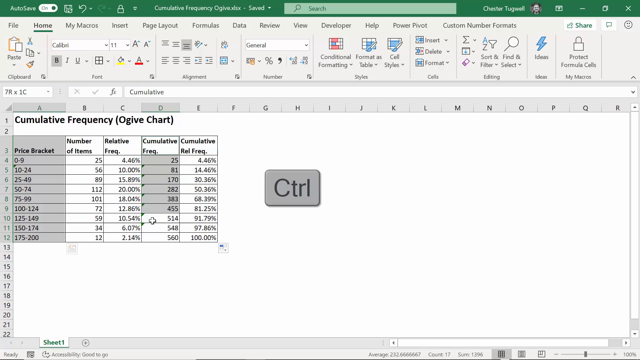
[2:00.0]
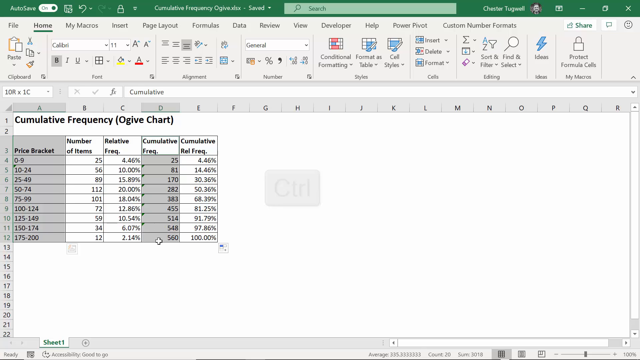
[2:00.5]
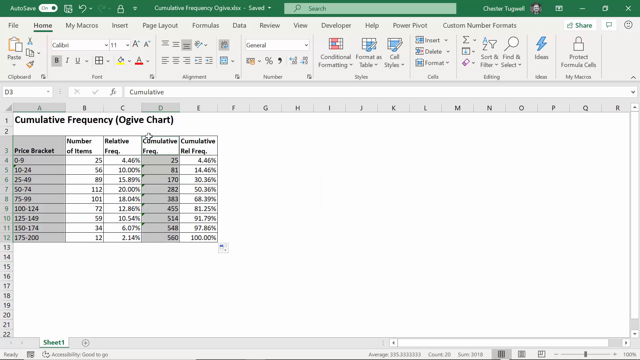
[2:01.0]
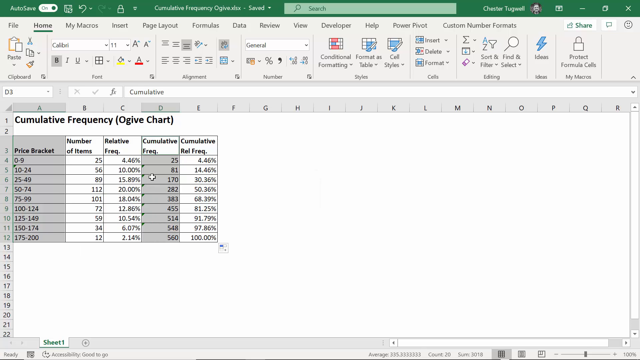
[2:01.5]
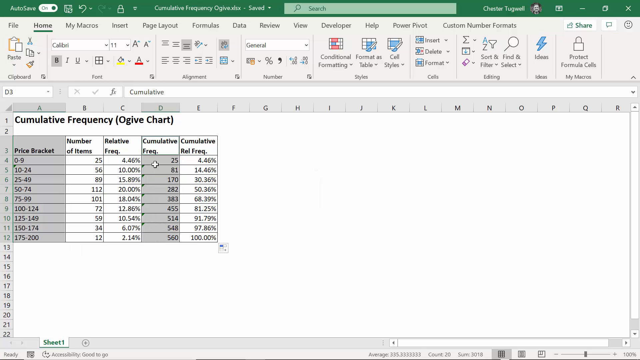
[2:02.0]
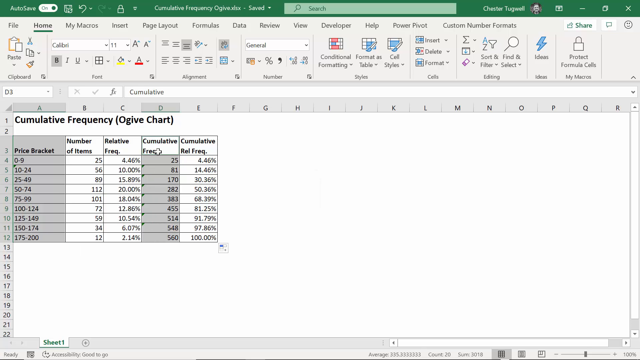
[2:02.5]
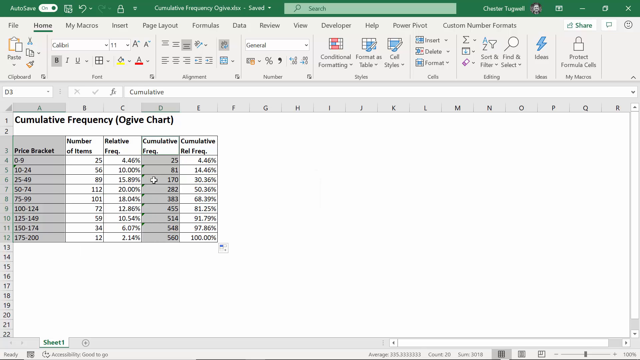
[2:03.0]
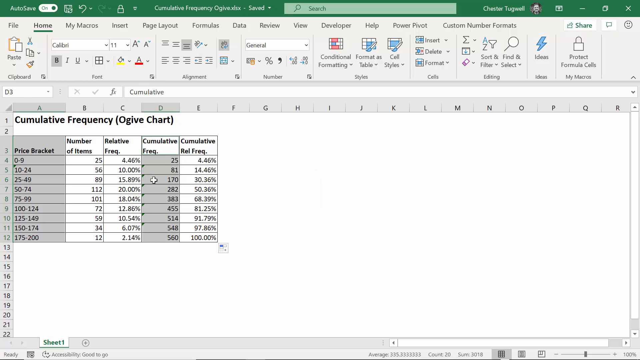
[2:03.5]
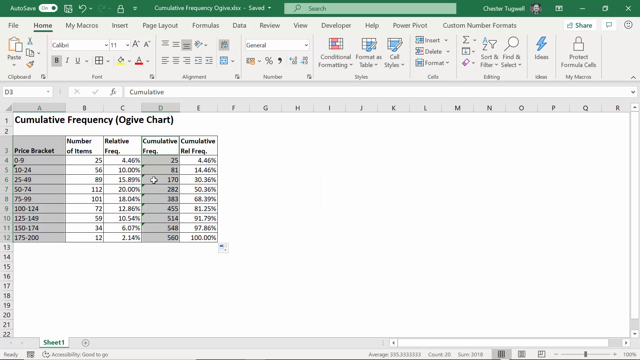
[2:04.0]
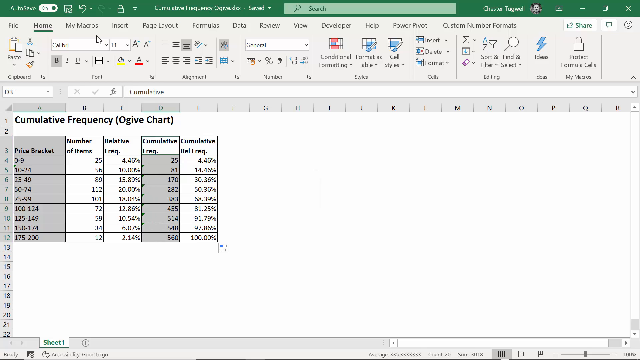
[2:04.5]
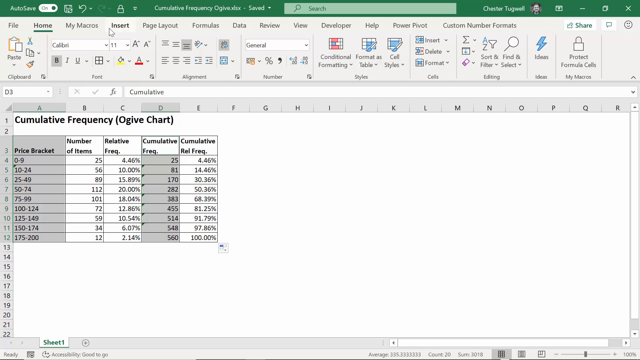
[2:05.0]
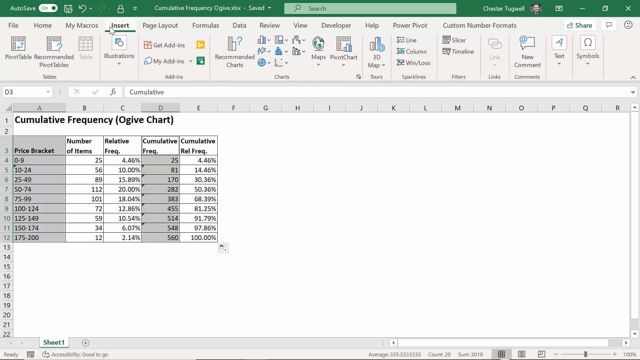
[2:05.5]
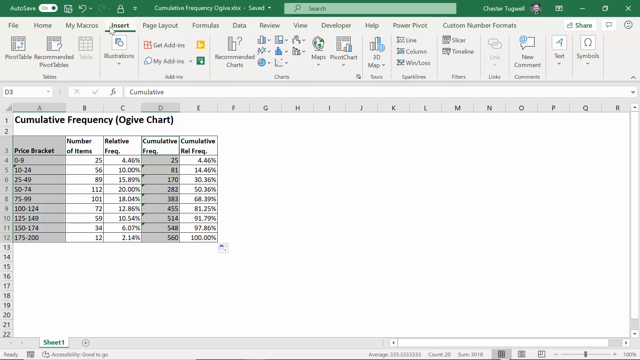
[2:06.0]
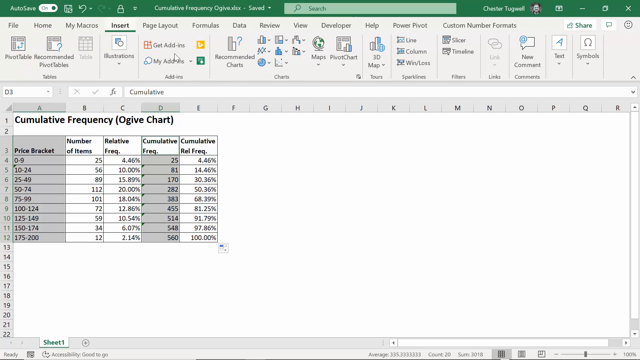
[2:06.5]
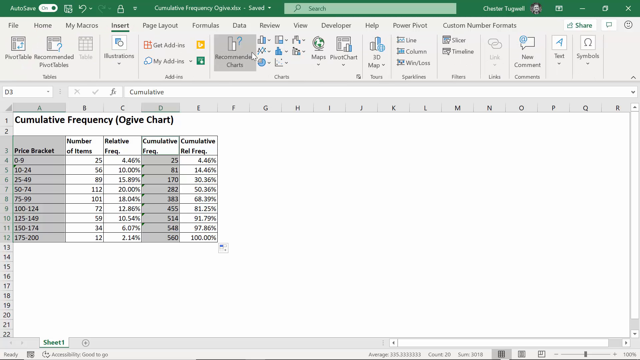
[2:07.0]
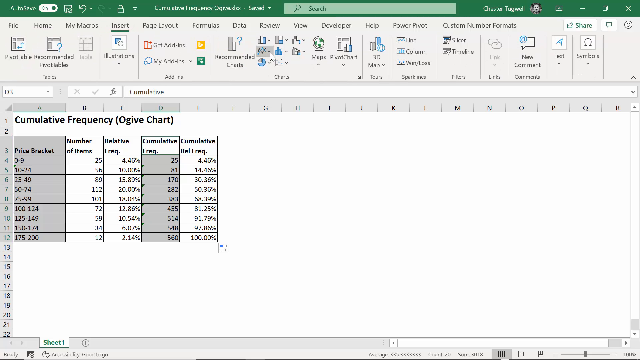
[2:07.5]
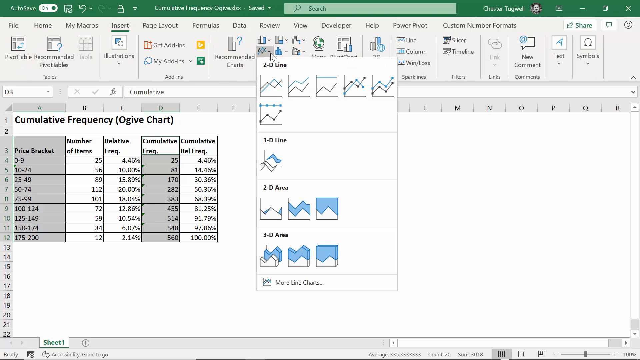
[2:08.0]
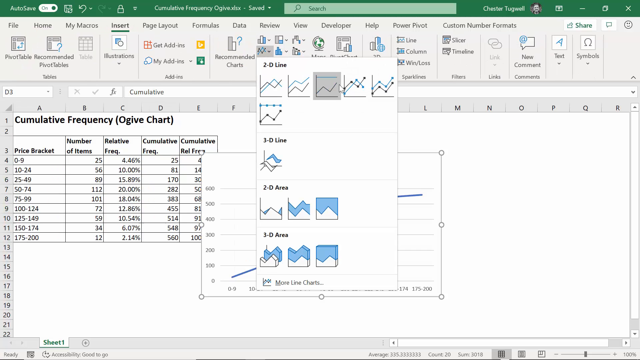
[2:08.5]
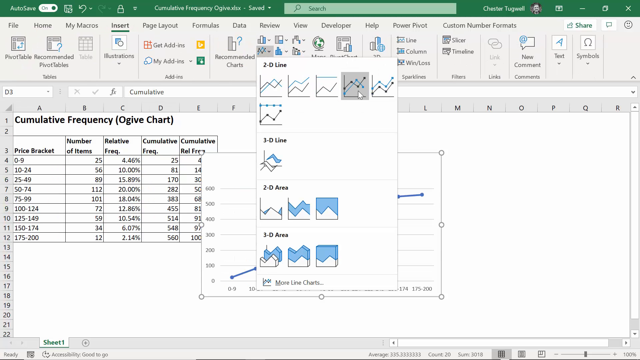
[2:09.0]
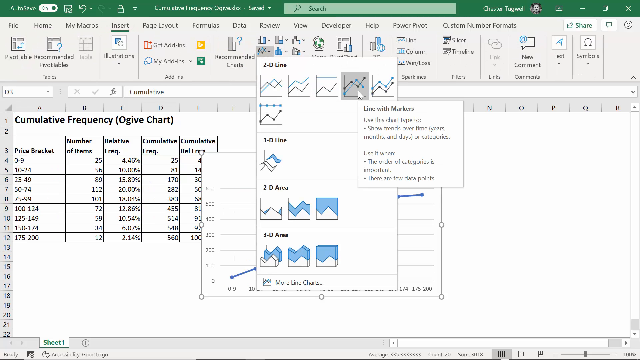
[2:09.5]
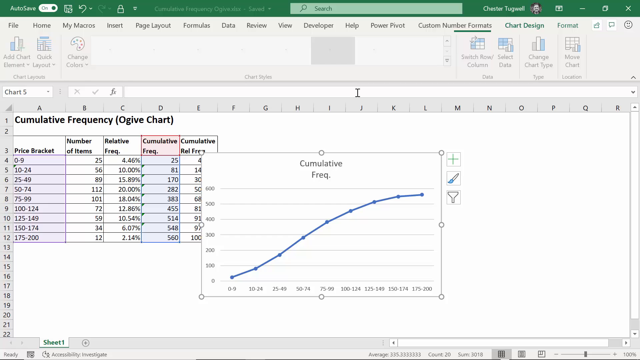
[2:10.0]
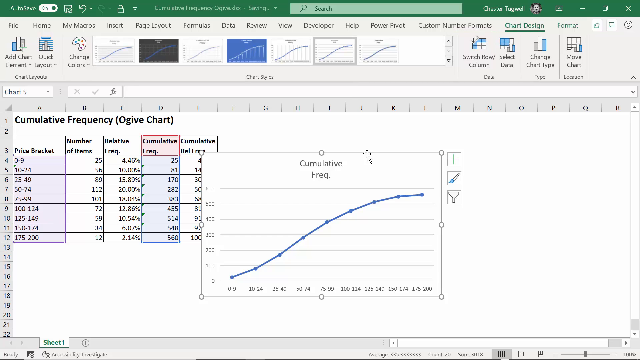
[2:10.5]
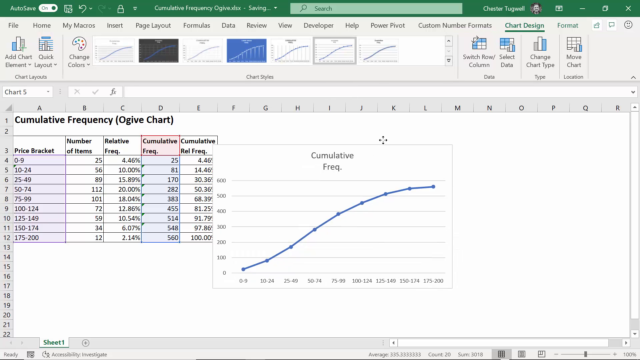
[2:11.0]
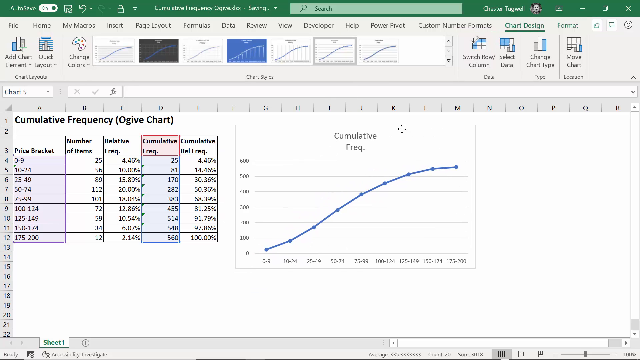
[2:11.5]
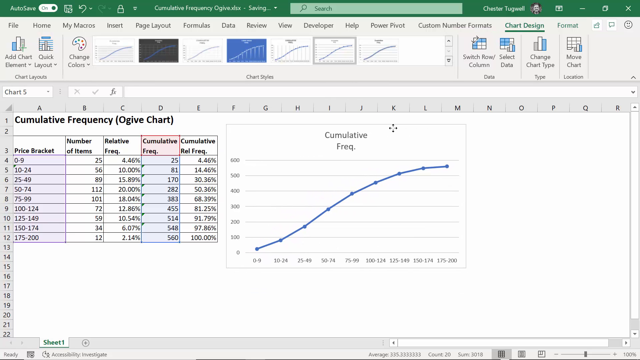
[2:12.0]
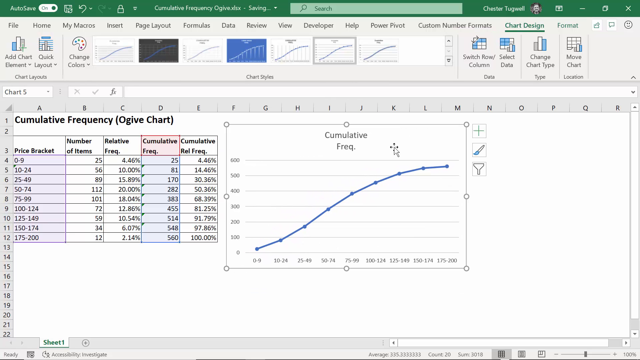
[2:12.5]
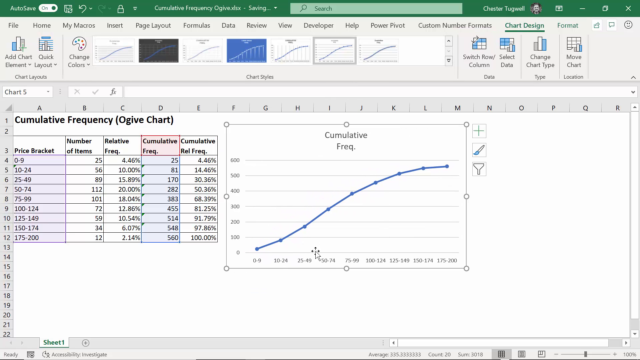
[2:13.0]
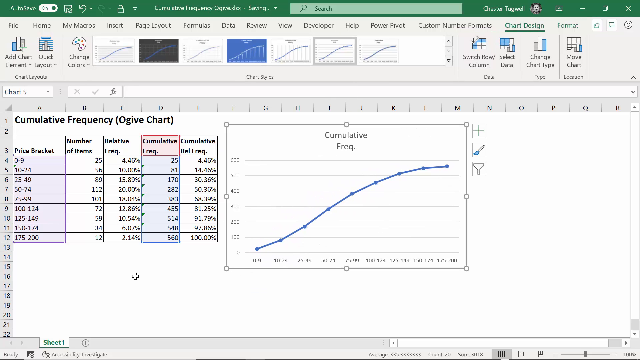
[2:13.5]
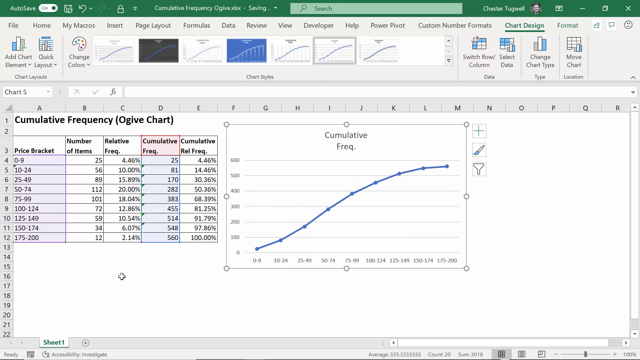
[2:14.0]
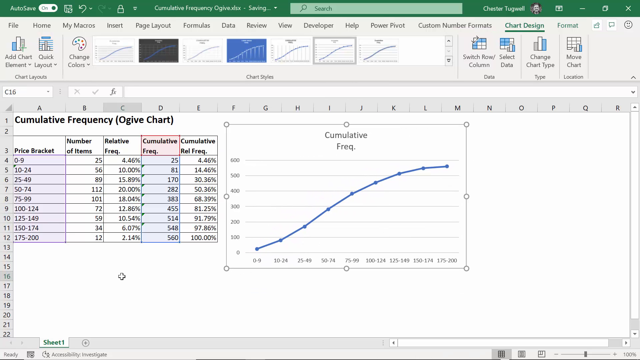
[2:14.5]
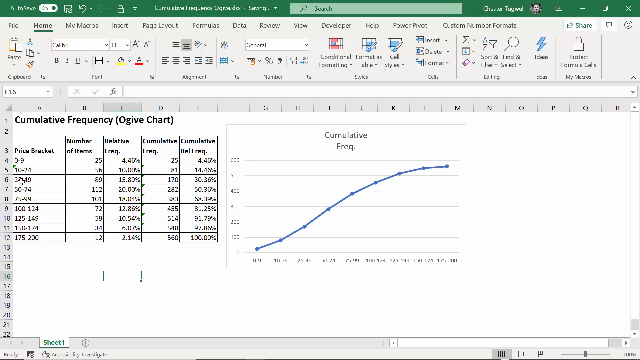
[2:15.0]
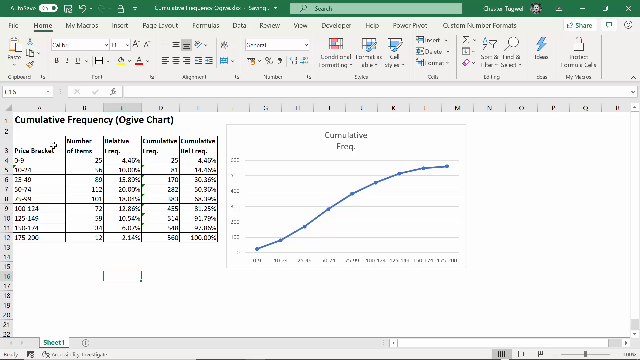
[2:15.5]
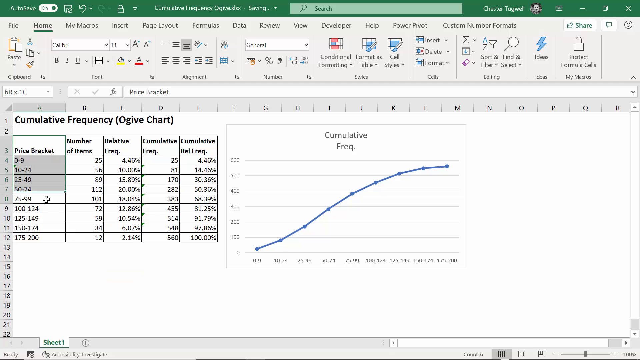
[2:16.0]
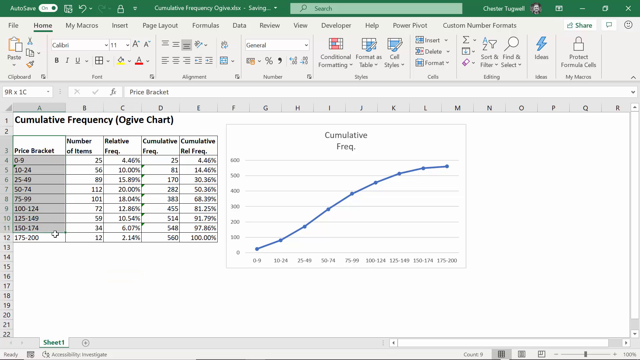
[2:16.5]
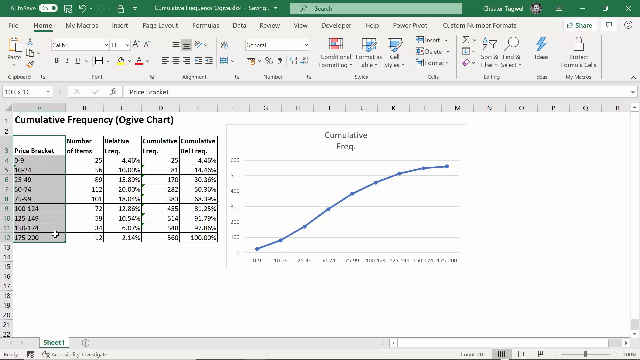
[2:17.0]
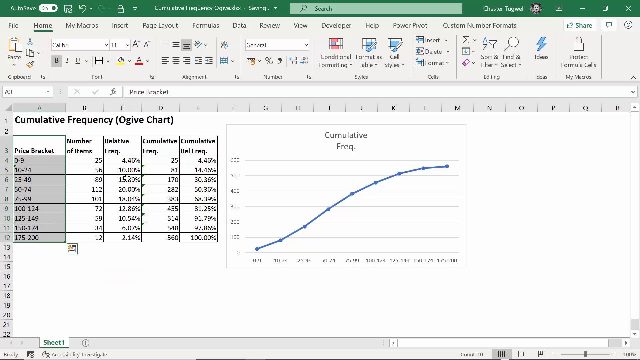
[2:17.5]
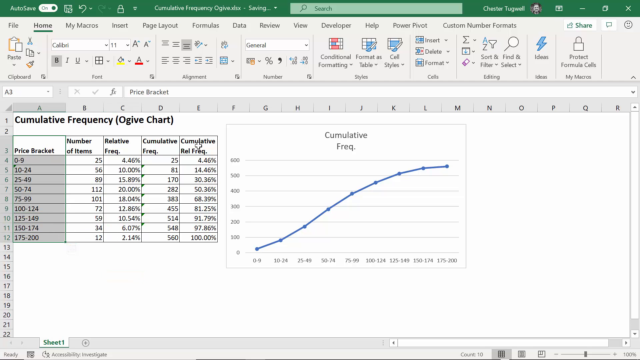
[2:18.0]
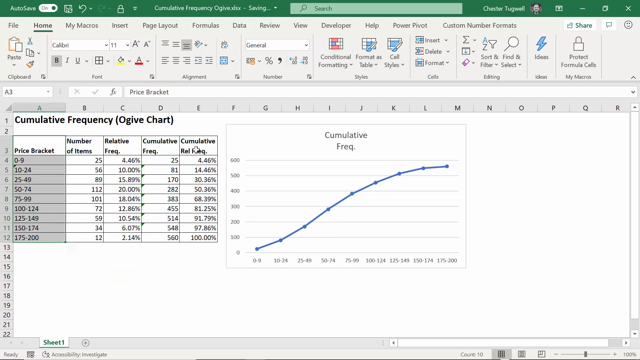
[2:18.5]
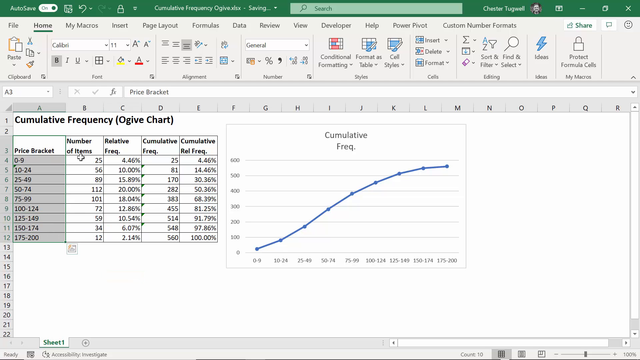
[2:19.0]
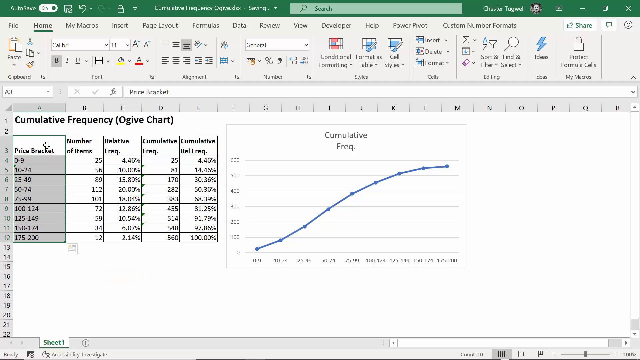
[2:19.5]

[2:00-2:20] With the price bracket and cumulative frequency columns selected, the person goes into Insert and inserts a new chart of the cumulative frequency, a line chart showing the progression of each box. It has dots for each box, nine points in total, matching the table, with each point representing a cumulative frequency from 25 to 560. Only the cumulative frequency is shown on this chart, since it is based on that column. The person then control-copies the price bracket section.